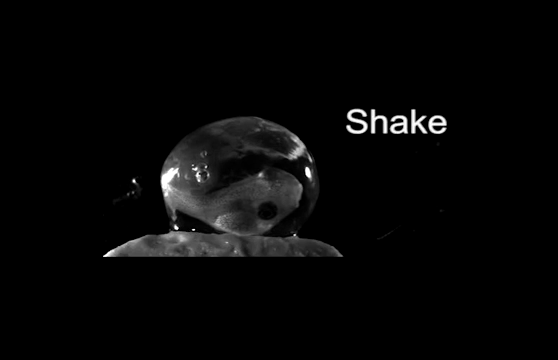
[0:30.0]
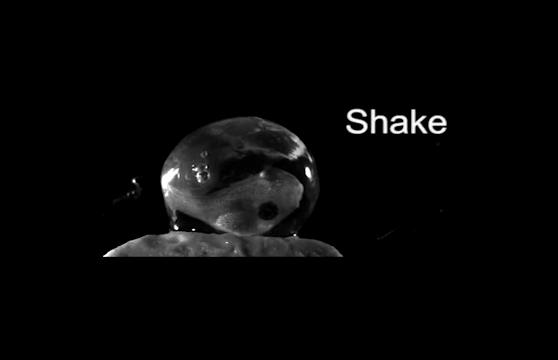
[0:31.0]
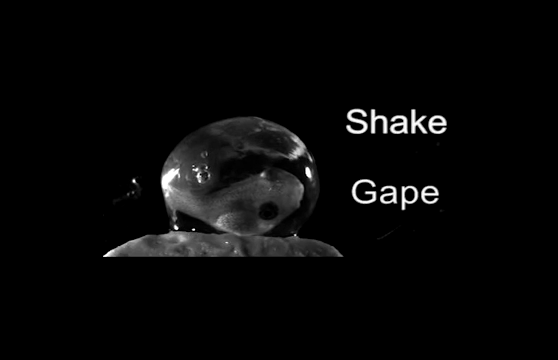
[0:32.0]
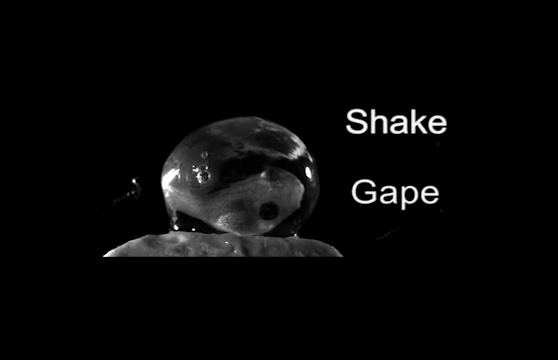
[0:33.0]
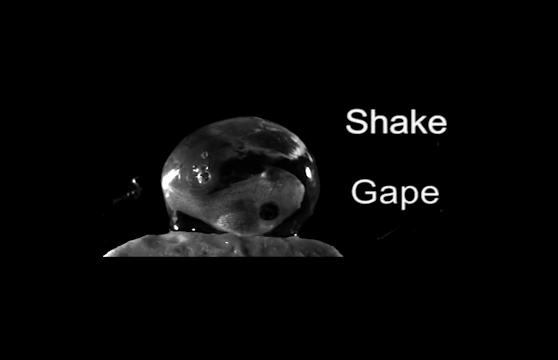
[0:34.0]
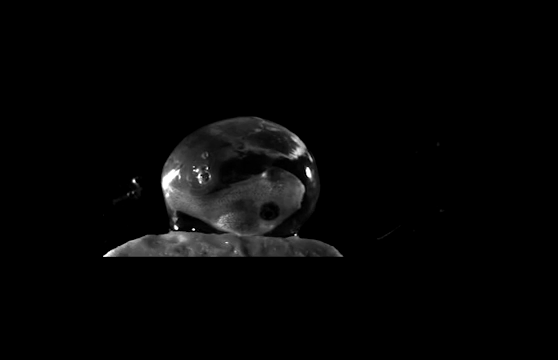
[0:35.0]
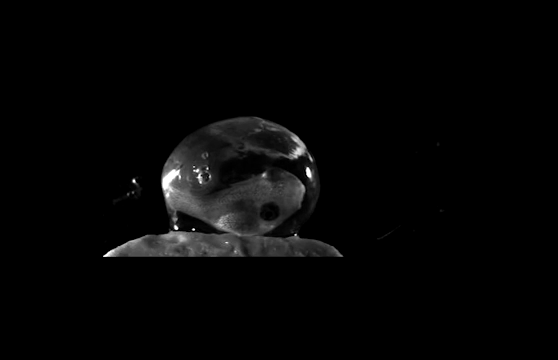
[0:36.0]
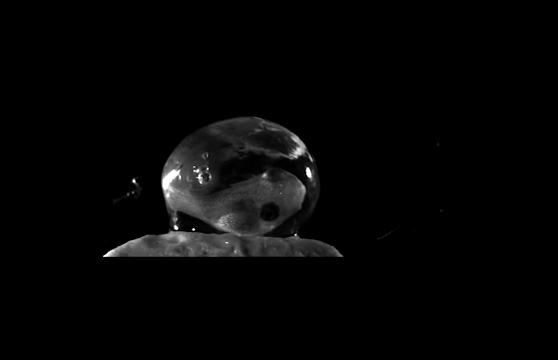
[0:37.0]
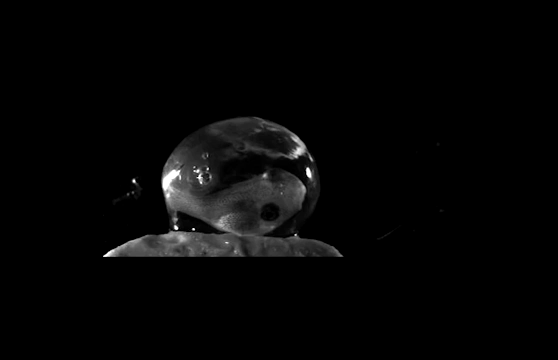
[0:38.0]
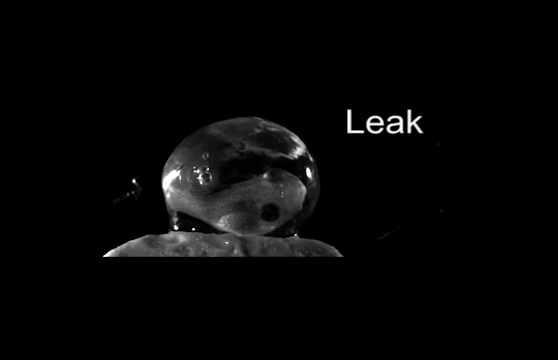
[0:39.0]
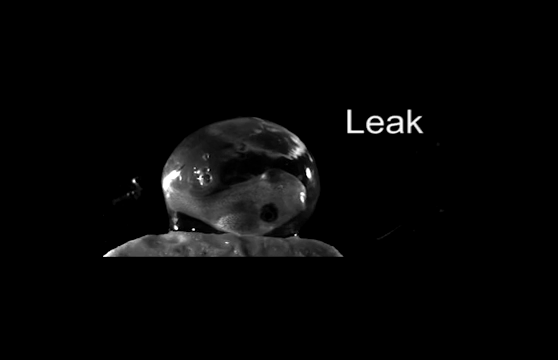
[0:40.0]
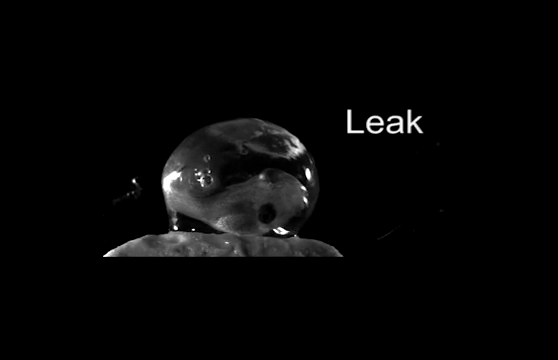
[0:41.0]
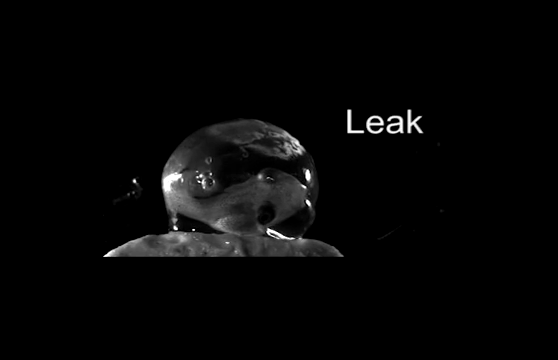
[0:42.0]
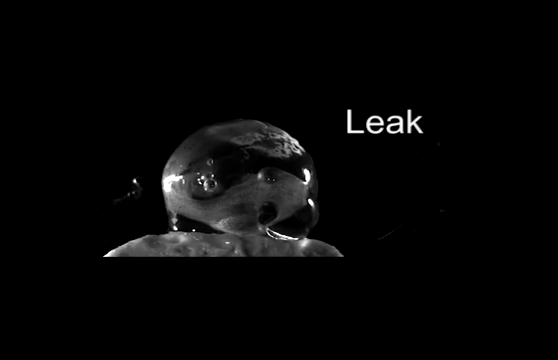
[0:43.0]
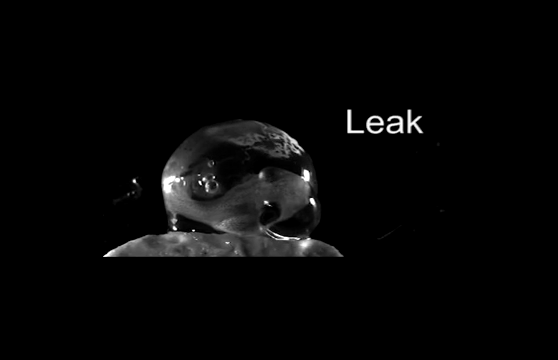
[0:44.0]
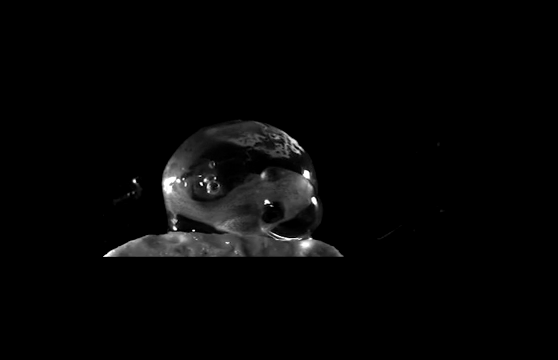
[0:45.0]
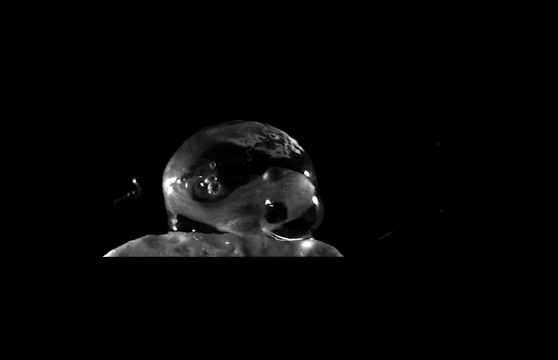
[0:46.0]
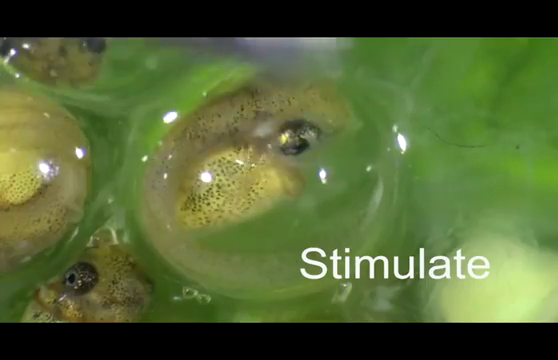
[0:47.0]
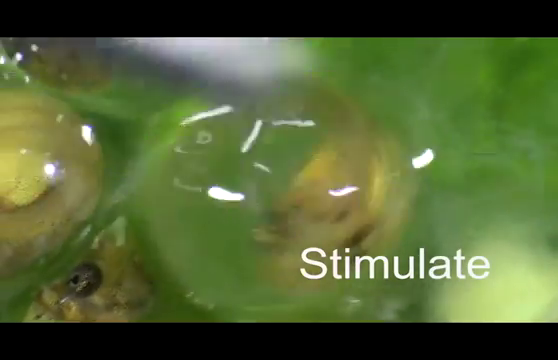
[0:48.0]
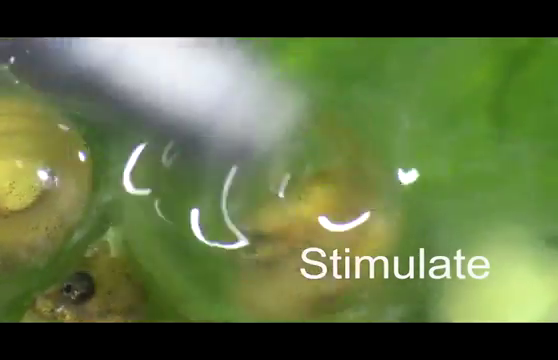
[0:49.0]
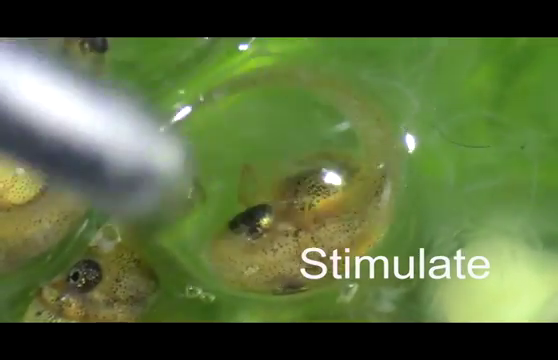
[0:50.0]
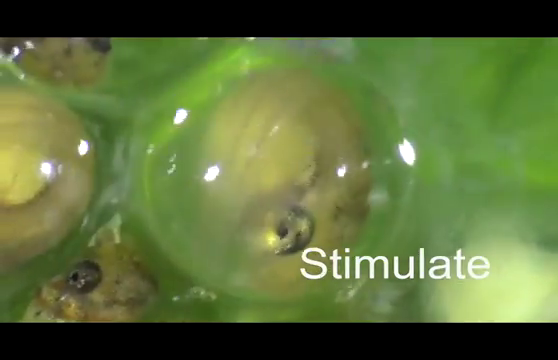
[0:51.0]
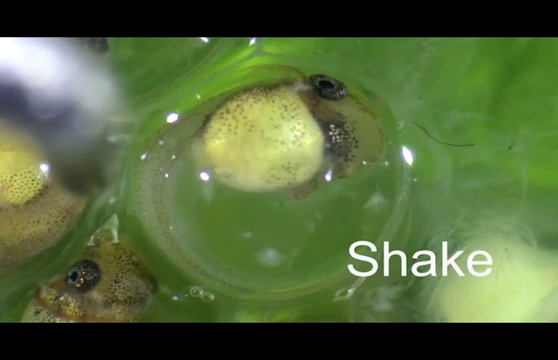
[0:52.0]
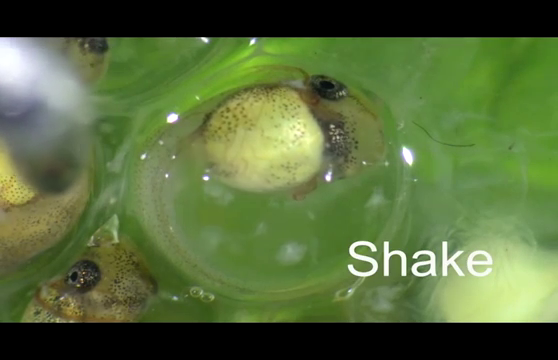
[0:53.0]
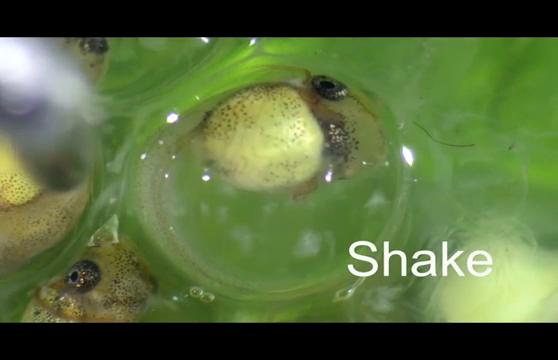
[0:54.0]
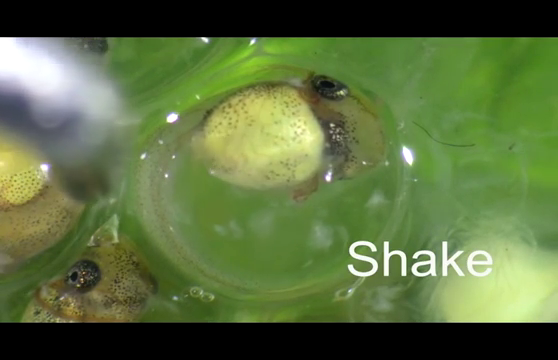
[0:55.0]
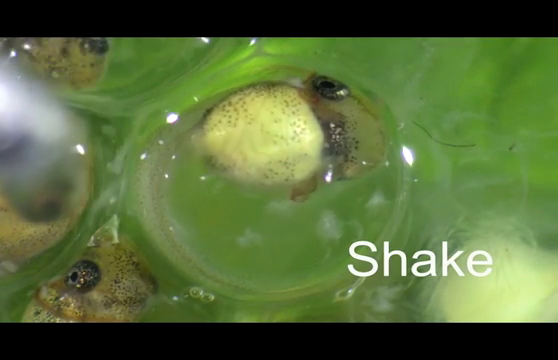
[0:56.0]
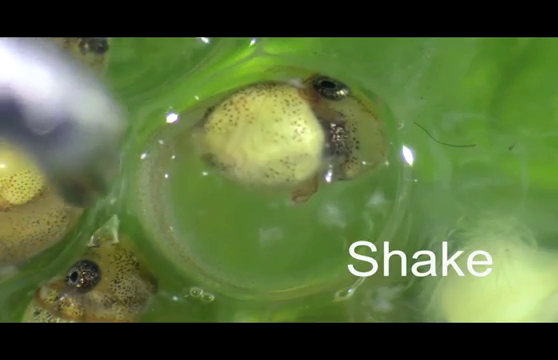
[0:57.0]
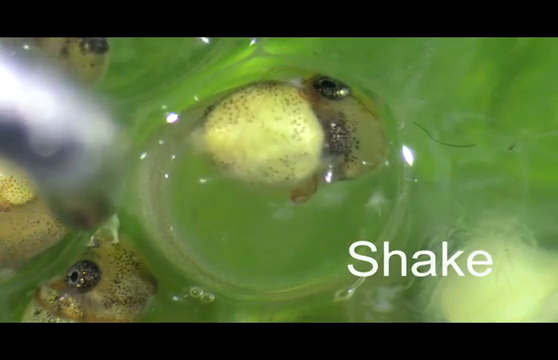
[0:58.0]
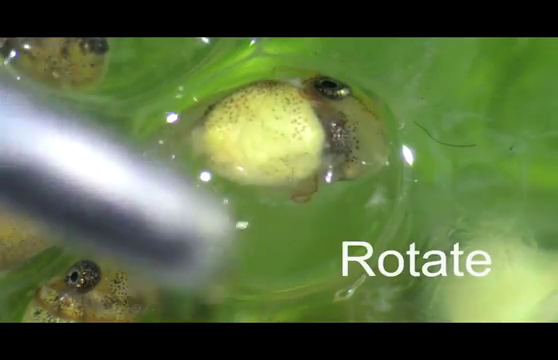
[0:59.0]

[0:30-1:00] A black and white video with a dark background, looking like it was filmed at night, shows an egg sac on a rock. Inside the egg sac are two eyes and a shape that looks like a tadpole or an embryo of some sort of animal. White words appear on the right side: "shake" and "gape". The embryo's mouth moves, and another word appears: "leak". The screen transitions to a colorful video of embryos still in their egg sacs, and a word in white text reads "stimulate". What looks like the edge of some sort of rod is used to steer around the embryos. The embryos' eyes and round forms are visible inside the egg sacs, along with their pulse and body movements.